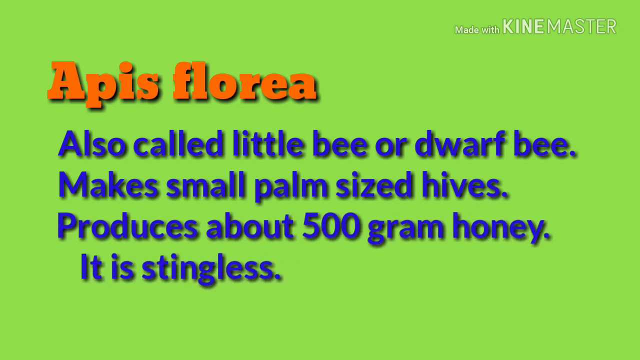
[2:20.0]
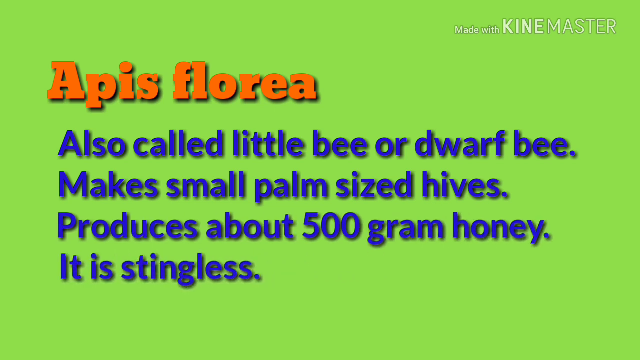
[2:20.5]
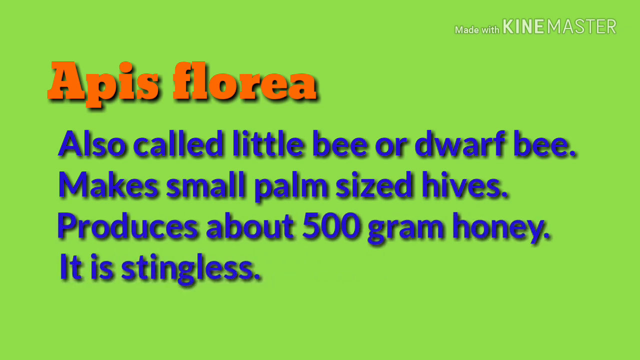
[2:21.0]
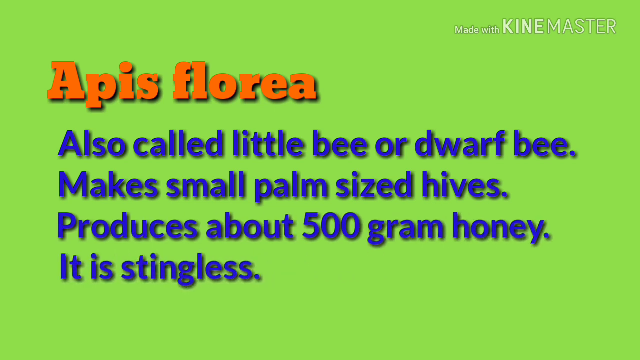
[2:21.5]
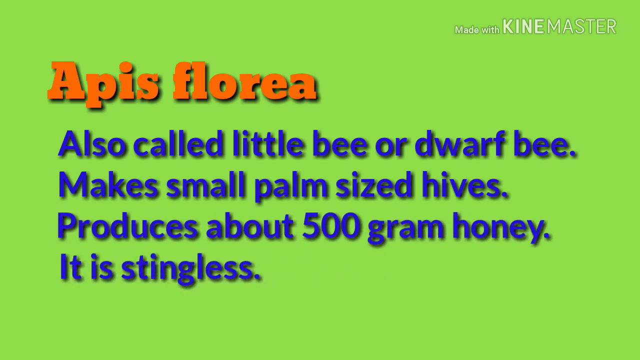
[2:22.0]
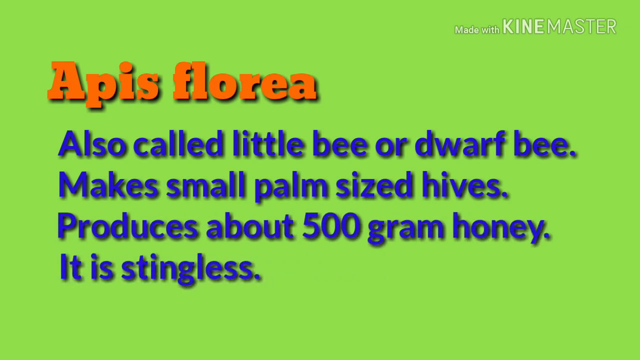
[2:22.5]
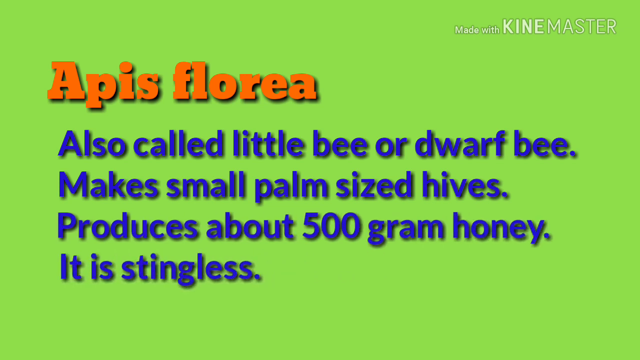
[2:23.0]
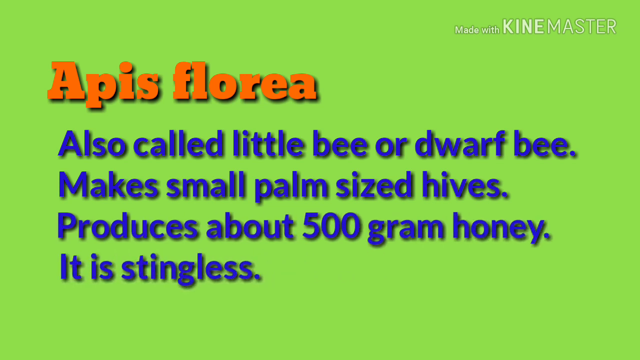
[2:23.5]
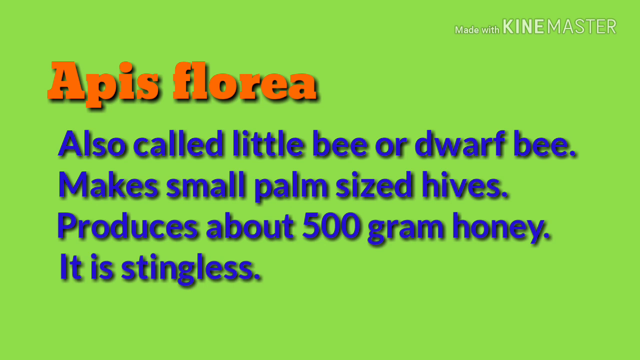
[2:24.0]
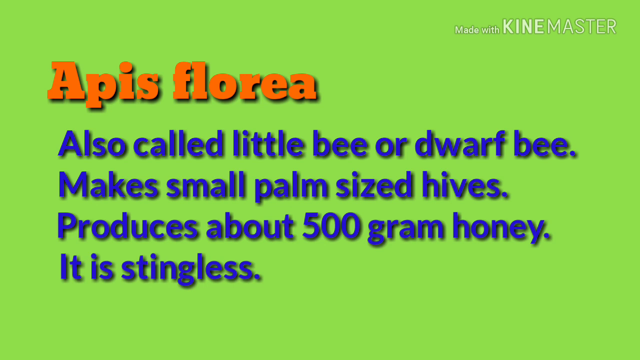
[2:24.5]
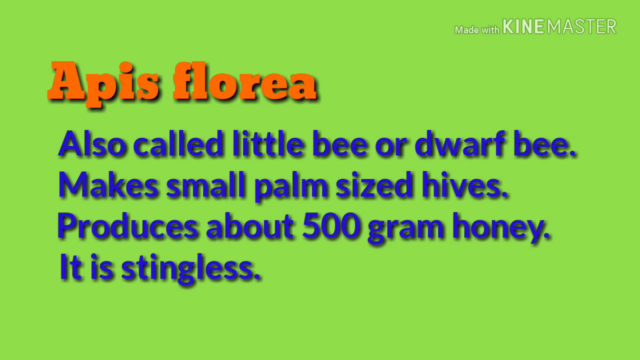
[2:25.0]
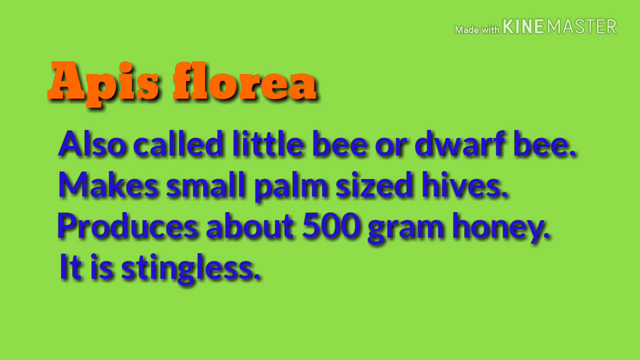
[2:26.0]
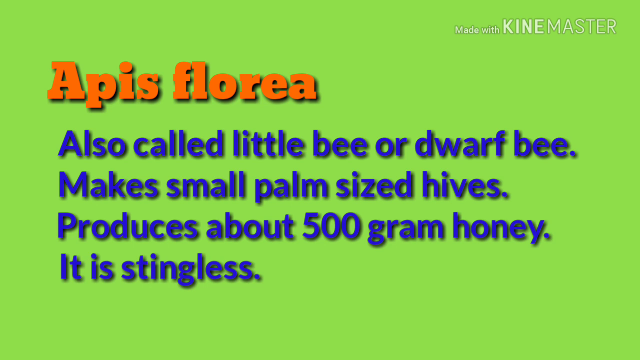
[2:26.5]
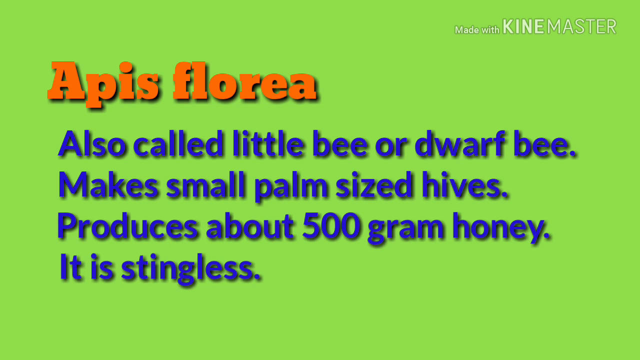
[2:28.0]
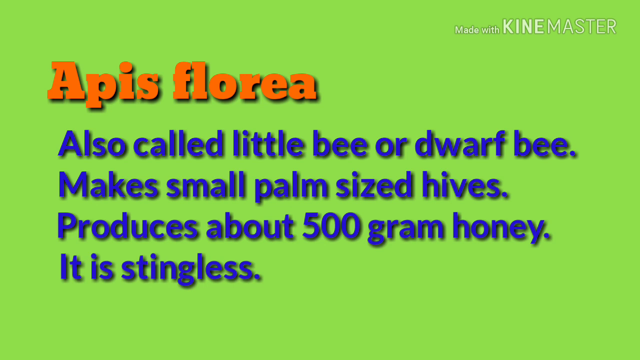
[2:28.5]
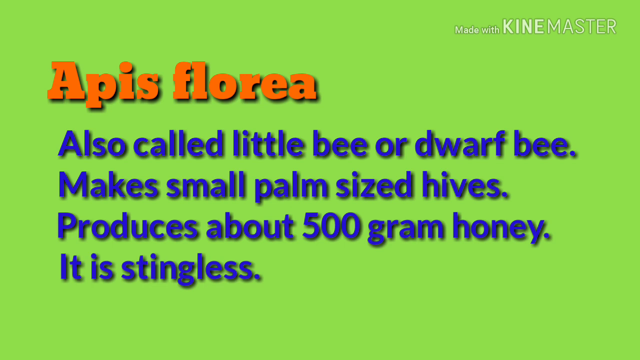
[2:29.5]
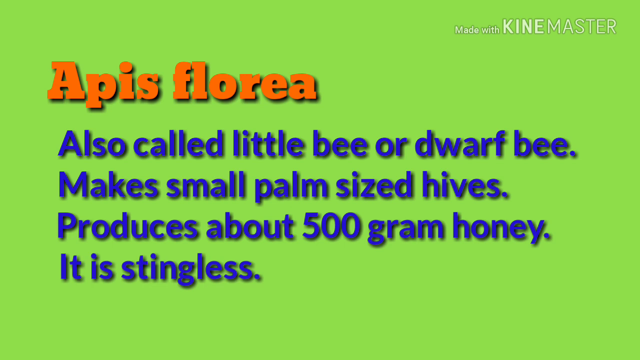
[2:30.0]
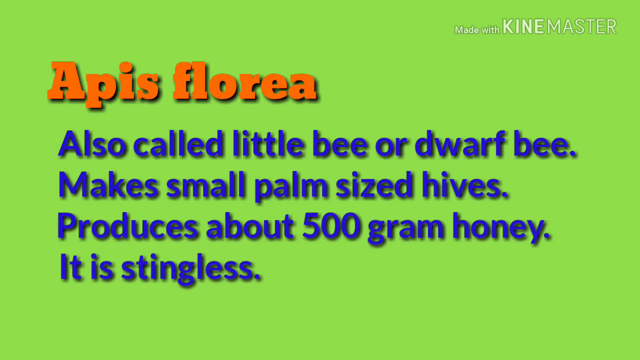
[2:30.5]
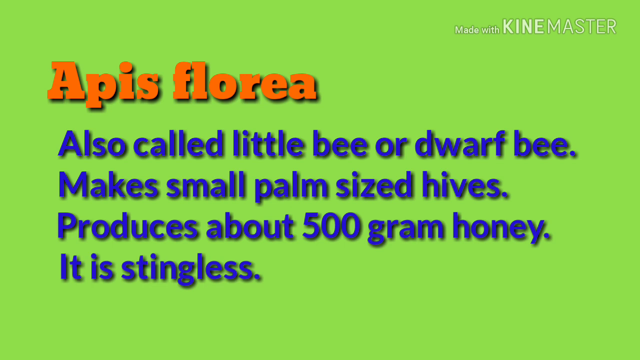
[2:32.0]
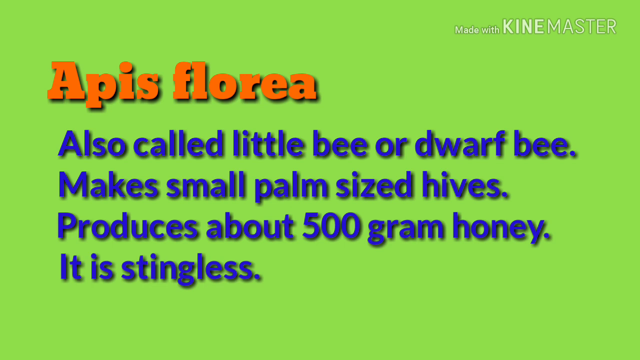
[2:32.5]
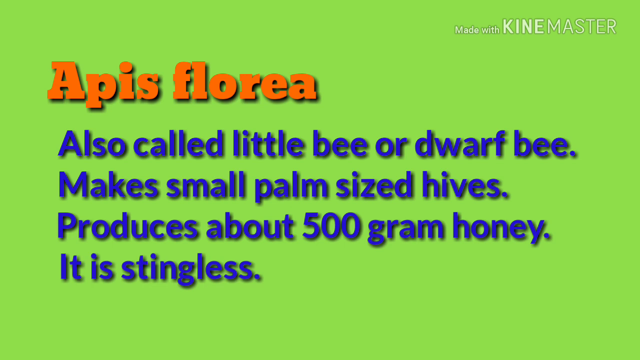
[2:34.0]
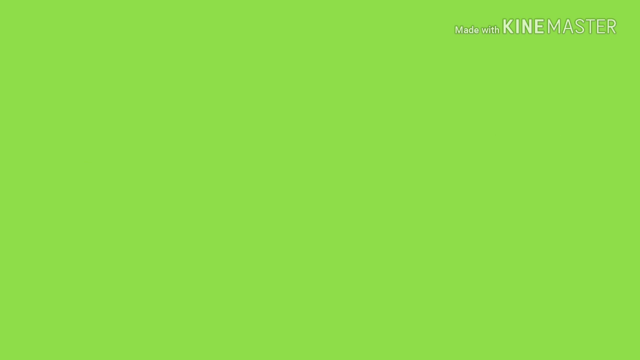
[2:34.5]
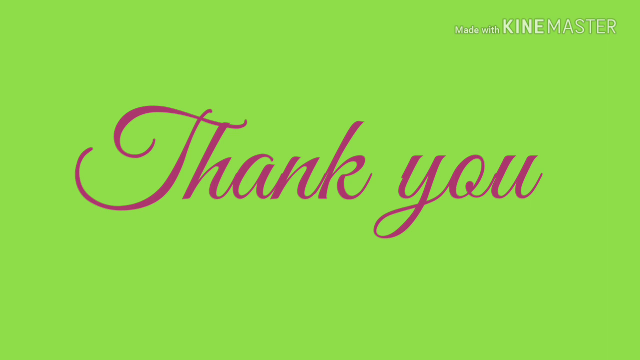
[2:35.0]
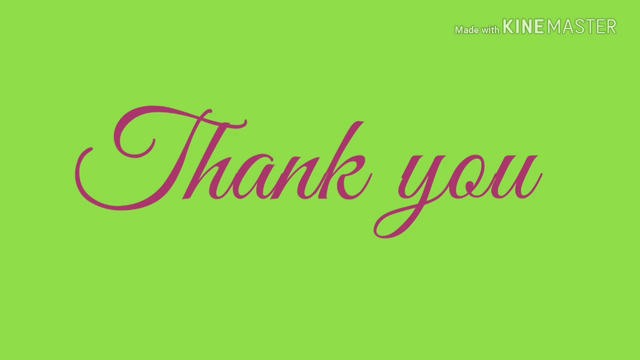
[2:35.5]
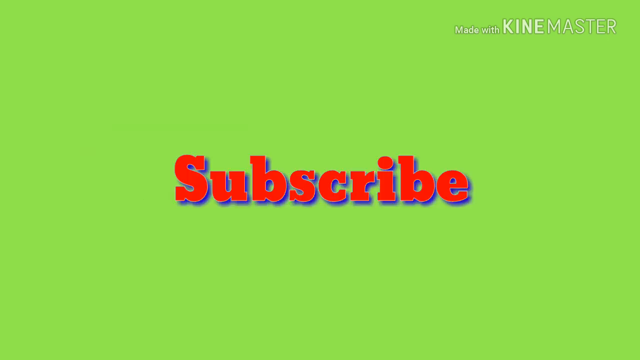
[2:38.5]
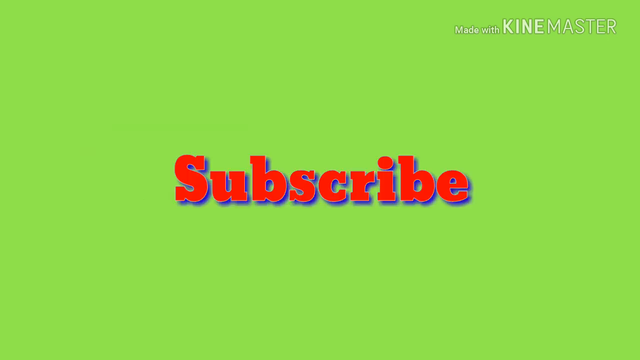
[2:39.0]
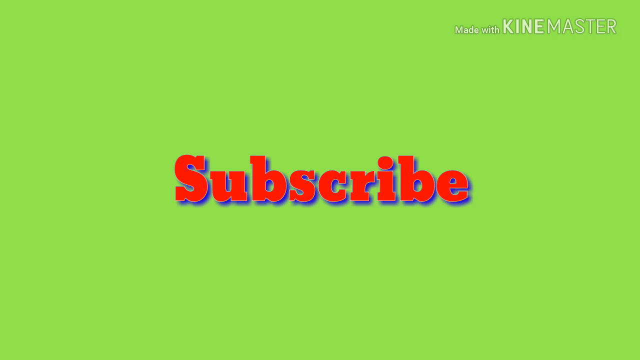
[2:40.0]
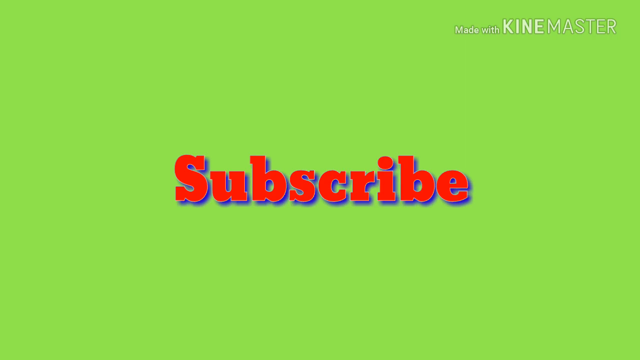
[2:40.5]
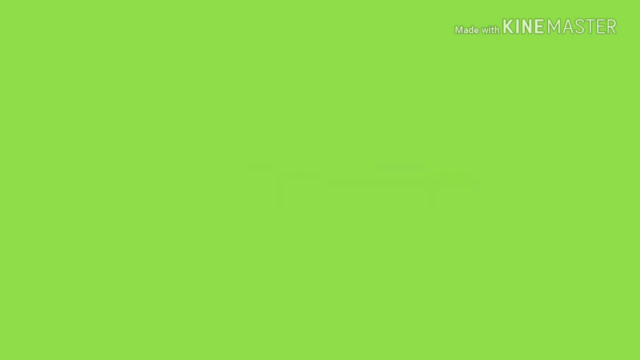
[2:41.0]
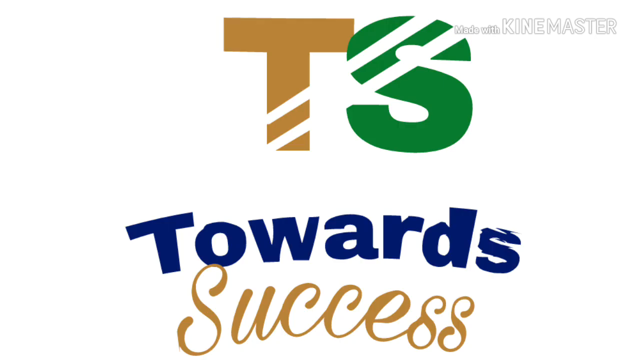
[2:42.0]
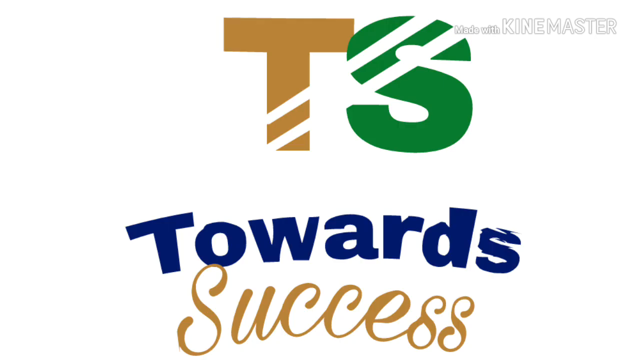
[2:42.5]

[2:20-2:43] On the green background, "made with Kine Master" is in the top right corner in white. "Apis florea" is written in orange, with blue lines reading "also called little bee or dwarf bee", "makes small palm size hives", "produces about 500 gram honey" and "stingless". The video slides to show "thank you", fades, and transitions to "subscribe" in red. It then fades to a logo reading "TS" on a white background, with a brown T and a green S and diagonal lines cutting through parts of both letters. Below the logo are the words "towards success", with "towards" in blue and "success" in brown.